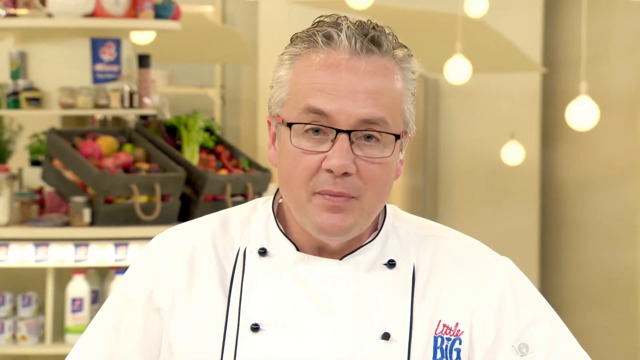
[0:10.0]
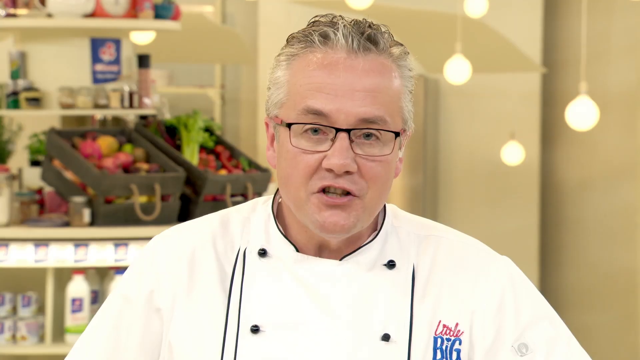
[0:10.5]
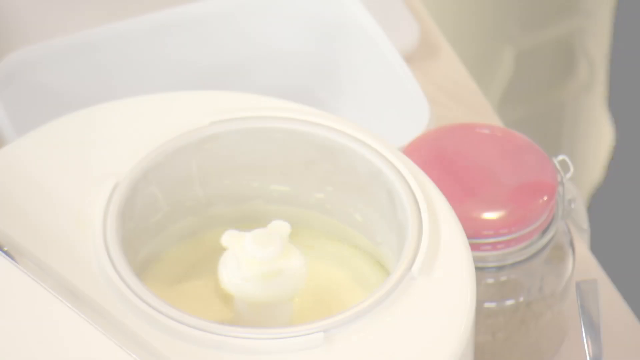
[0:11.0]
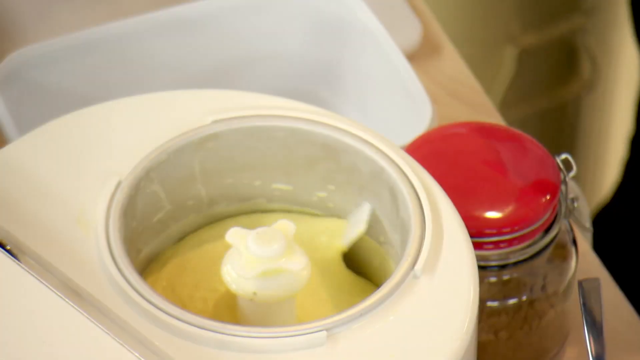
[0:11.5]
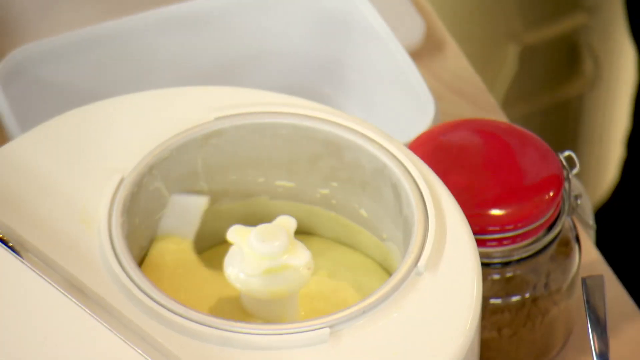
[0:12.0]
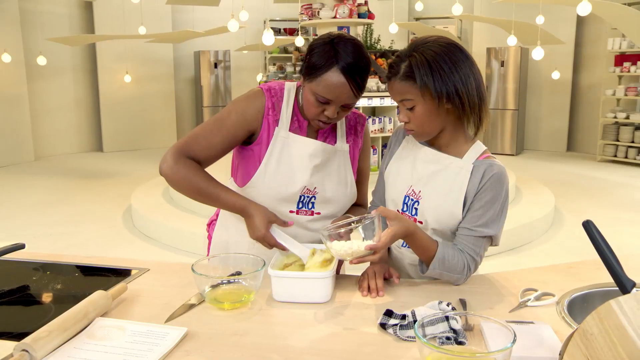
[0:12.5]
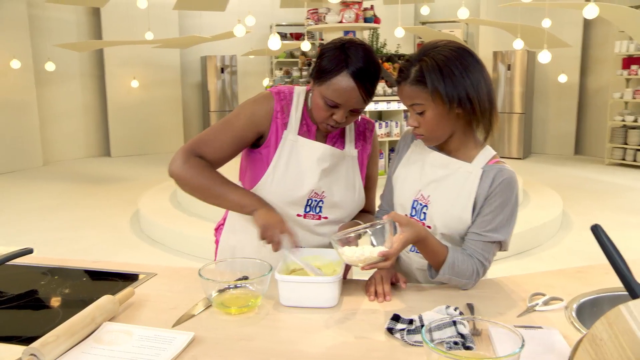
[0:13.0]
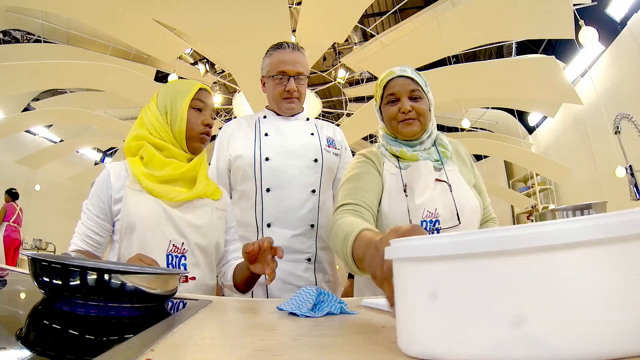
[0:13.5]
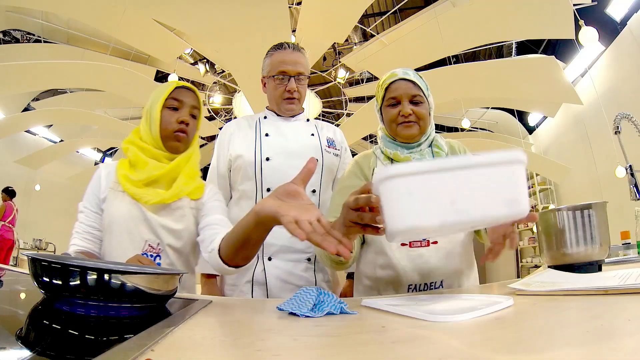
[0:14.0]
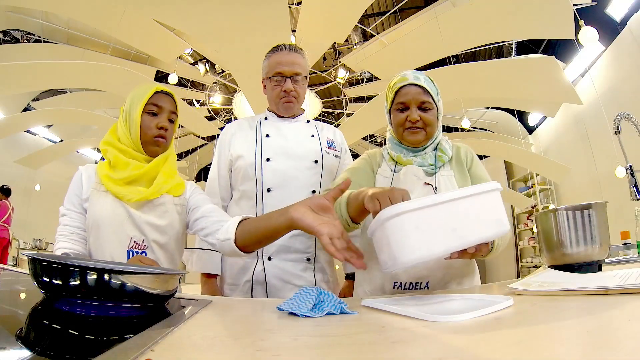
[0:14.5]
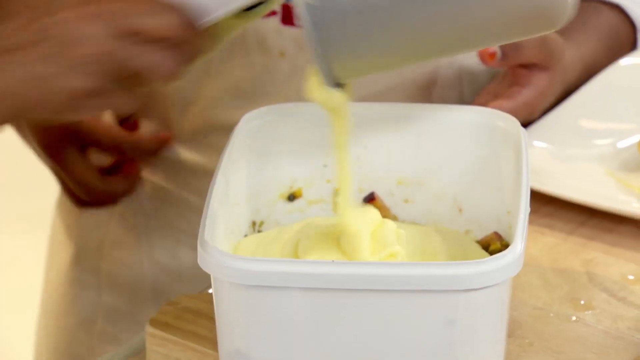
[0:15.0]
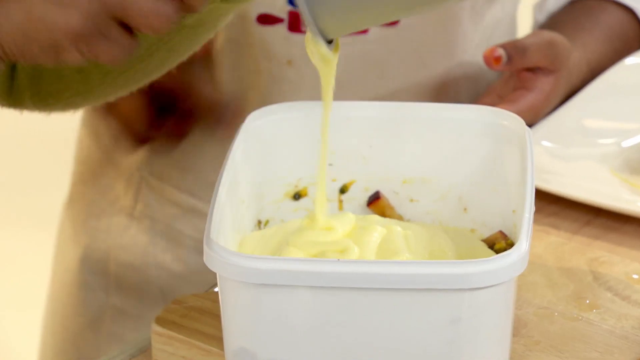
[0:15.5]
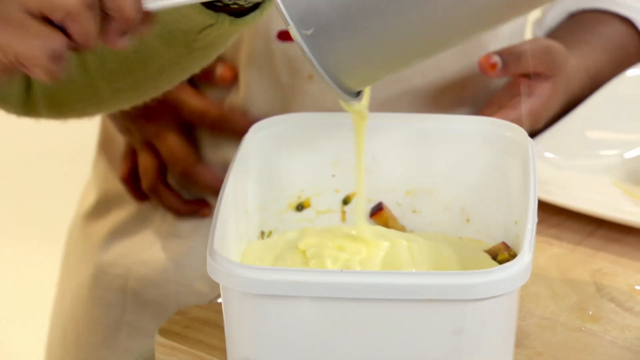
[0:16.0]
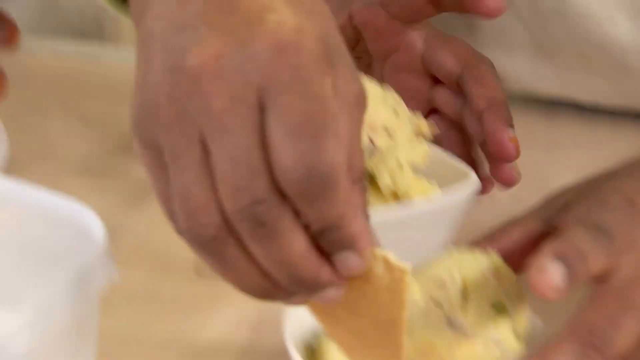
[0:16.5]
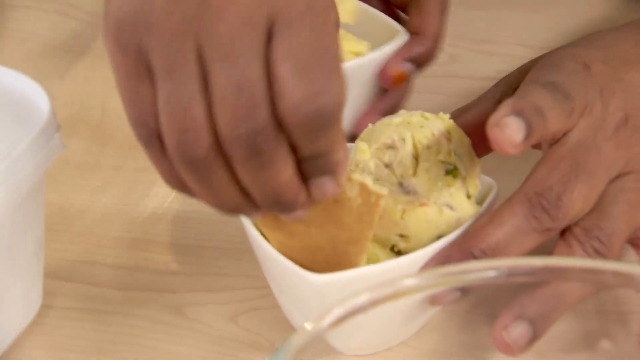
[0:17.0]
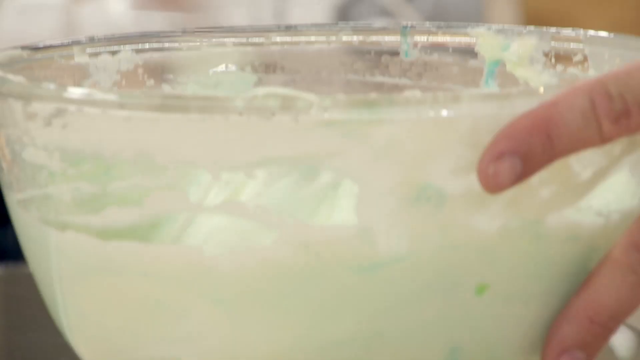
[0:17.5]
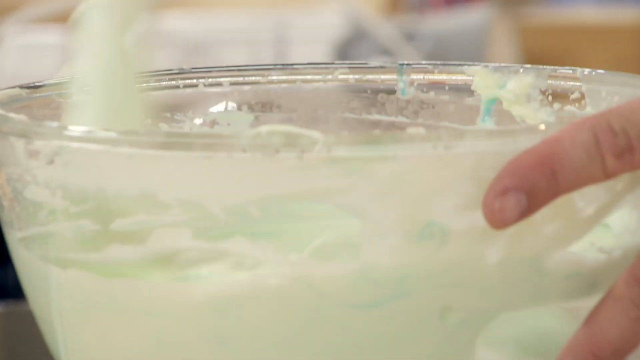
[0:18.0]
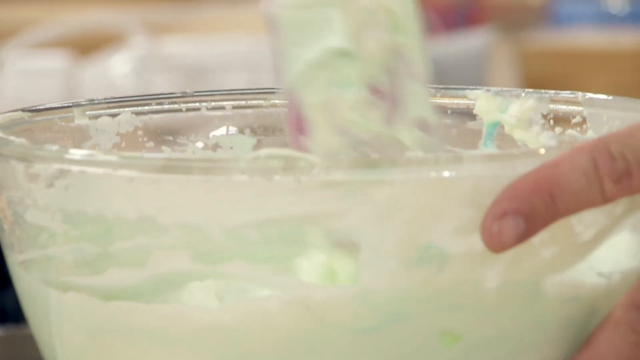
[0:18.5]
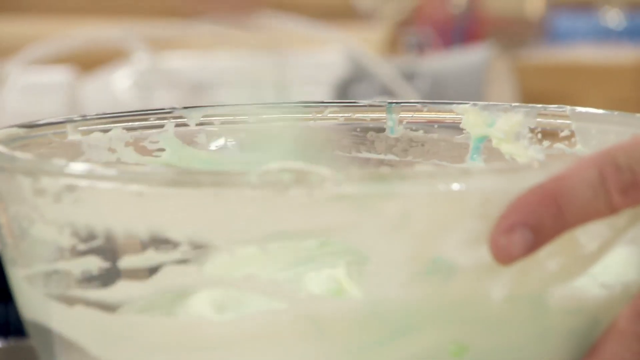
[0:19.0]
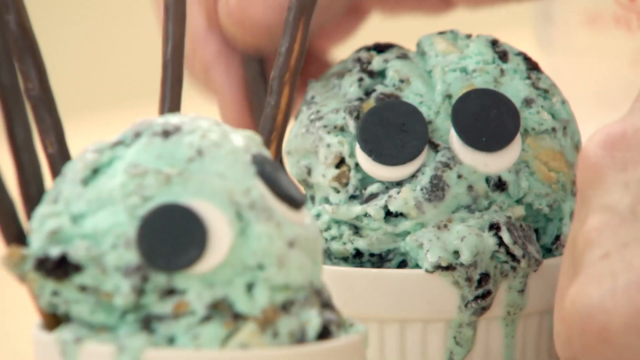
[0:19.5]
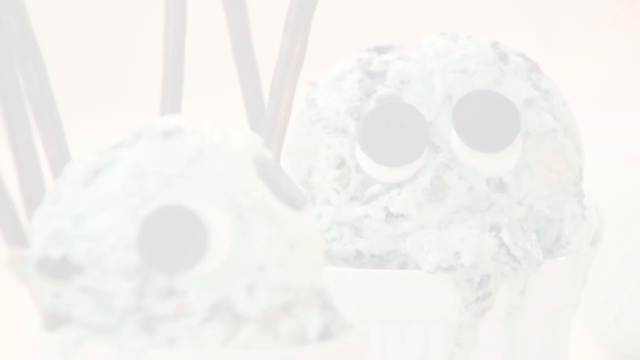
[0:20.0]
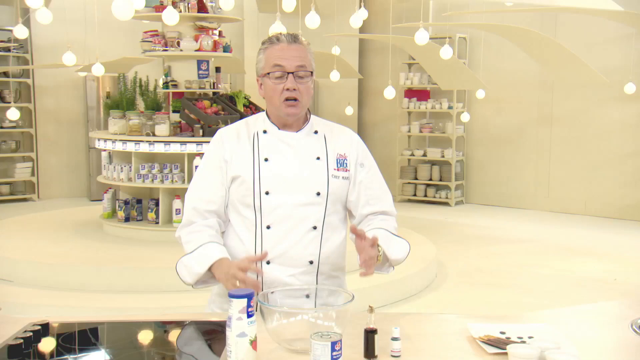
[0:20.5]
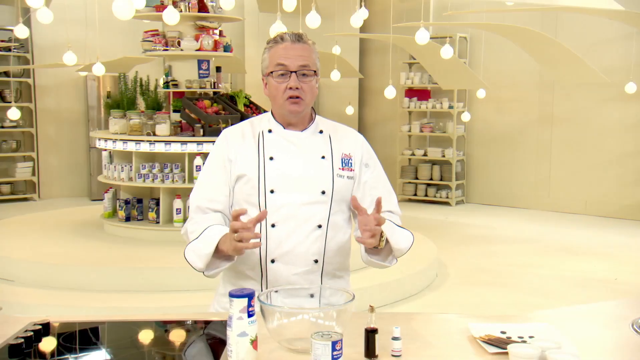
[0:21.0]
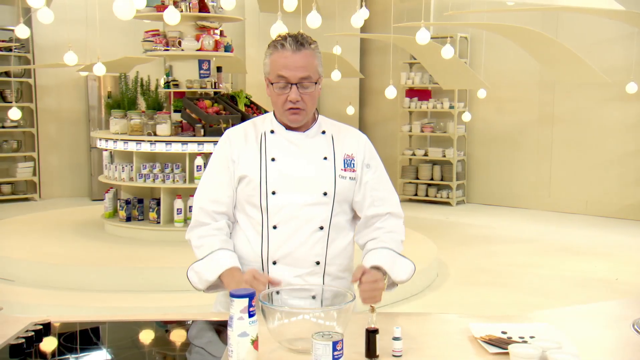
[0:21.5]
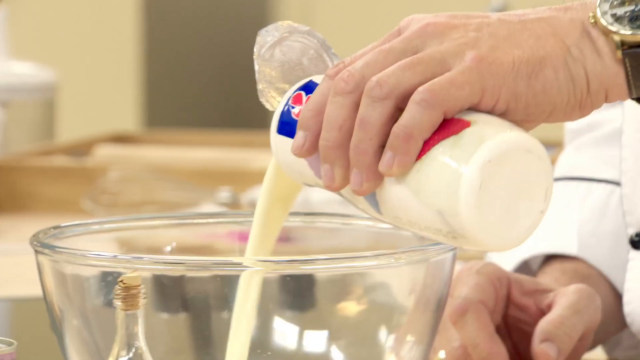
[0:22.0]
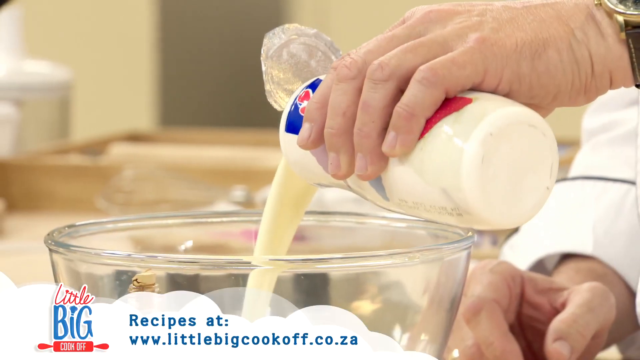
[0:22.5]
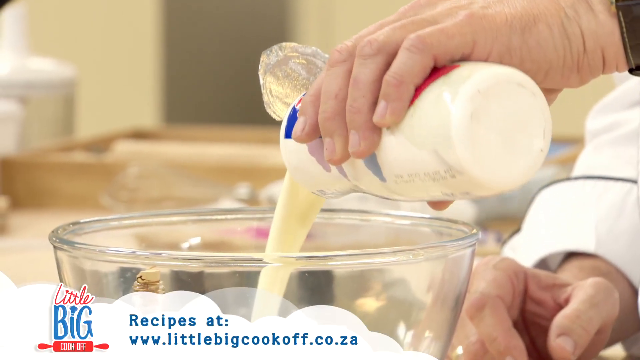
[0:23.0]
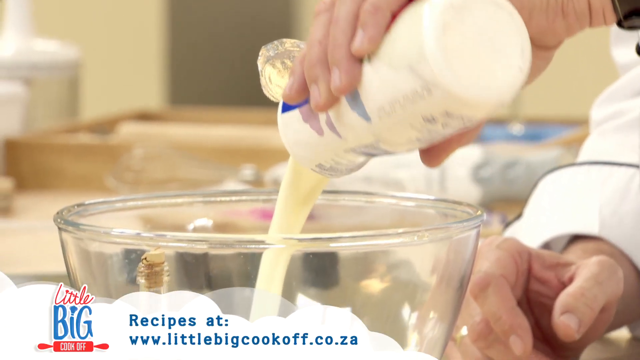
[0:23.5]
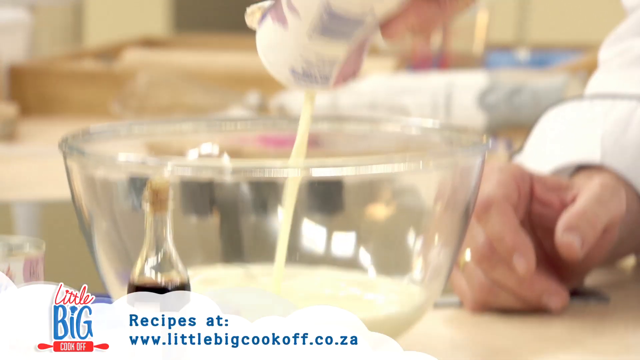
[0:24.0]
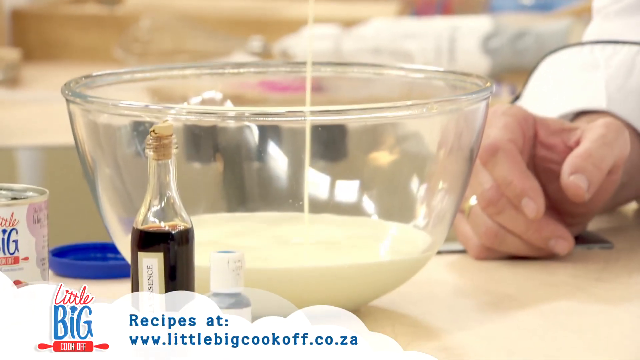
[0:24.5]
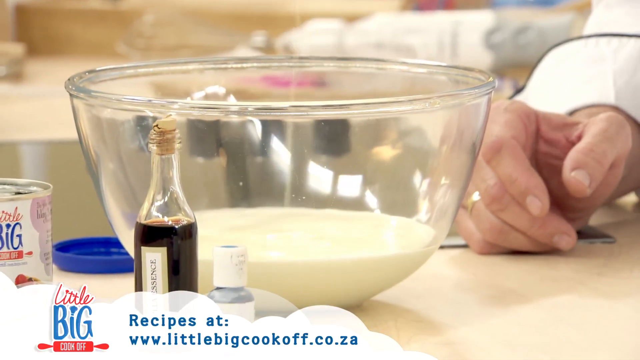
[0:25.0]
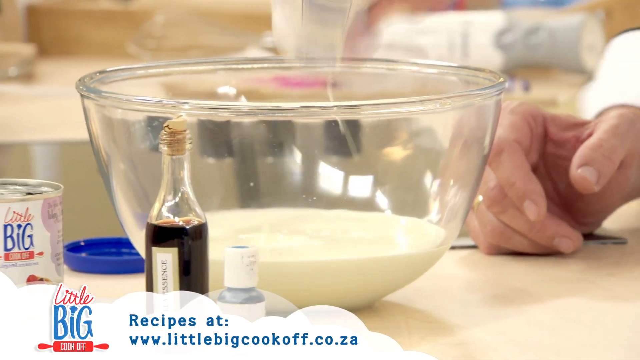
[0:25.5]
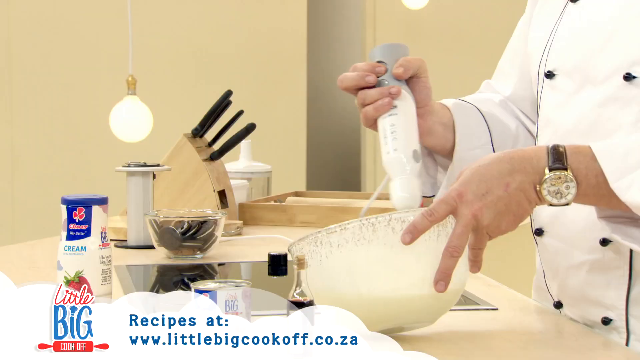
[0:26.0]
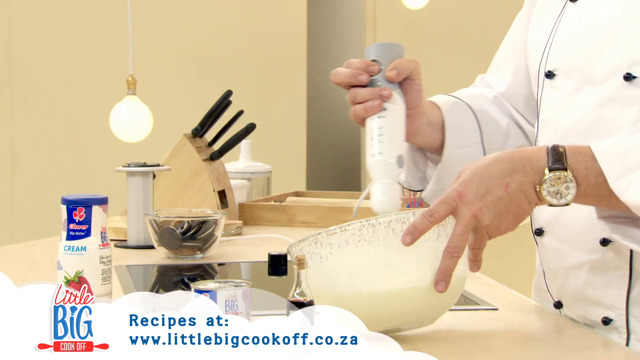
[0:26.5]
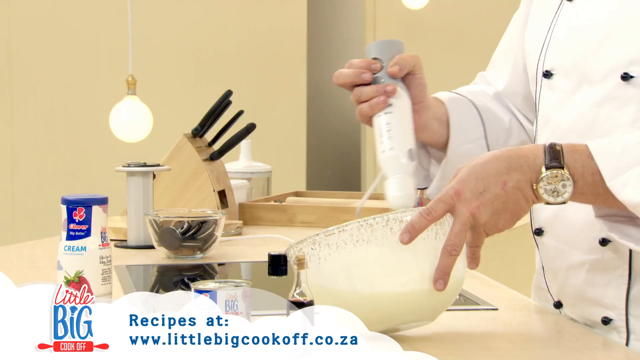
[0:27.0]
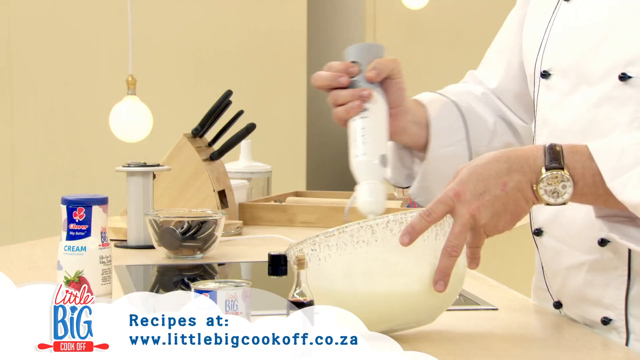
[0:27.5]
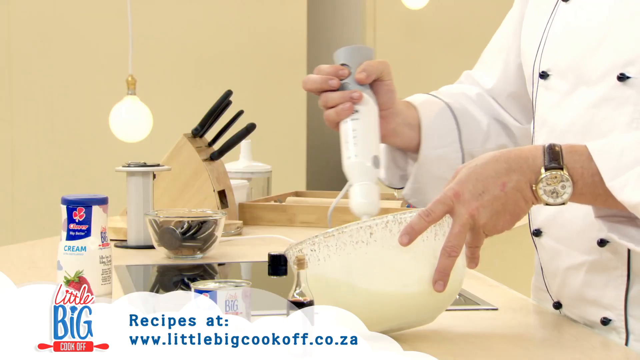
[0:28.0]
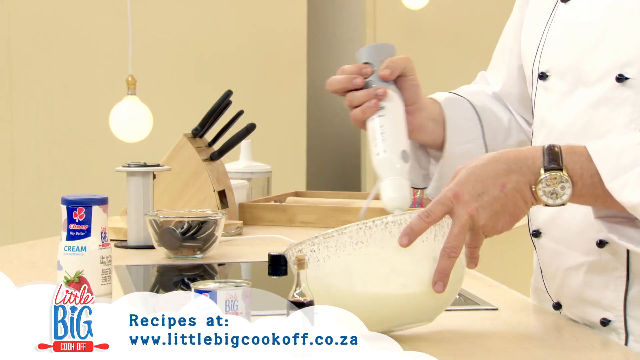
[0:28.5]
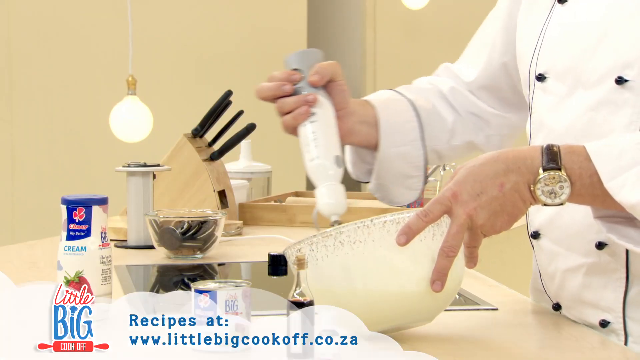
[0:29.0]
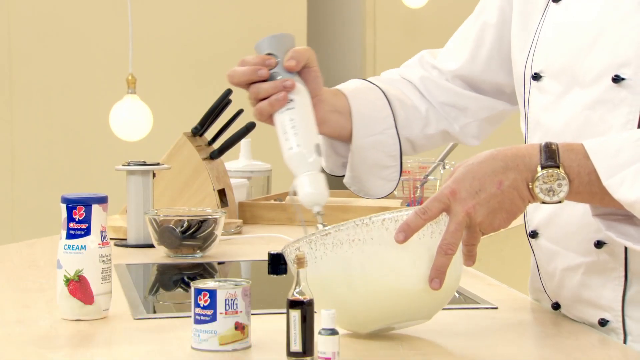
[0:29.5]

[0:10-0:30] A Caucasian man with white-gray hair and dark-framed glasses, wearing a white chef's coat with black button details, looks at the camera and speaks. Next, inside some kind of kitchen appliance, a yellow, somewhat liquid-looking substance spins around. Two women with darker skin appear, wearing white aprons that say "Little Big Cook Off"; one holds a clear bowl with something white inside it, the other holds a white spatula, and they mix a yellowish substance in a white container on a countertop. A low view looks up at the chef, with a woman in a hijab on either side of him; one holds a white container and picks something out of it, while the other, in a yellow hijab, reaches over for the container. In a close-up of the white container, one person's hands hold it while another person's hands empty a yellow, liquid-looking substance from a pot into it. A set of hands reaches down and picks up a white bowl that appears to hold yellow ice cream. Hands then stir a kitchen utensil in a clear bowl containing some kind of white substance. Two white bowls hold green and brown ice cream arranged so that it looks like it has a pair of eyeballs. The chef is shown again from the waist up, the camera zoomed out slightly, looking at the camera and speaking with his hands a lot; he balls his hands into fists and hits them on the counter, not angrily, for an unclear reason. A male hand pours a white liquid into a clear bowl while blue text at the bottom of the screen reads "recipes at www.littlebigcookoff.co.za". On a countertop with a knife block and a container of cream, the chef holds the clear bowl of cream in one hand and an immersion blender in the other, blending the cream.